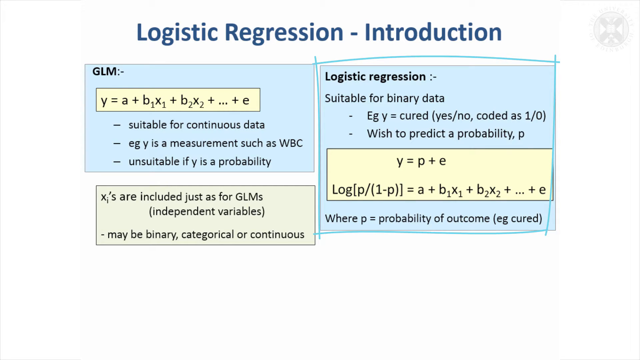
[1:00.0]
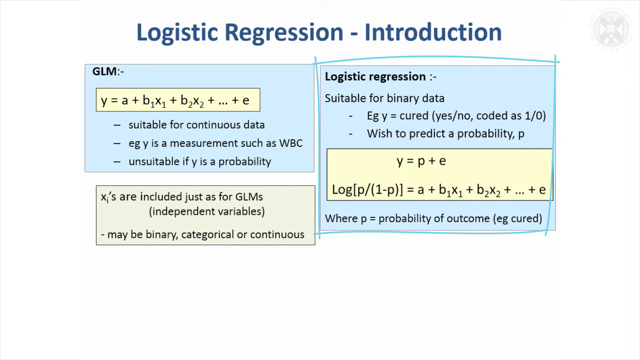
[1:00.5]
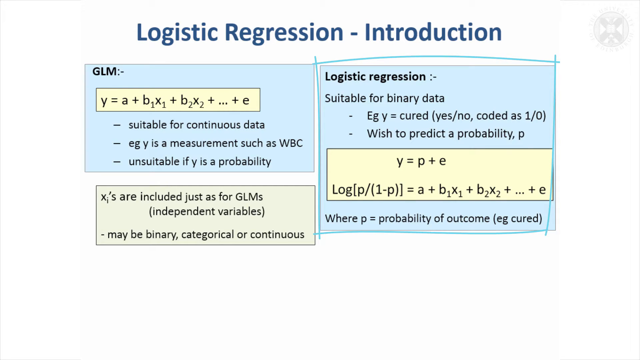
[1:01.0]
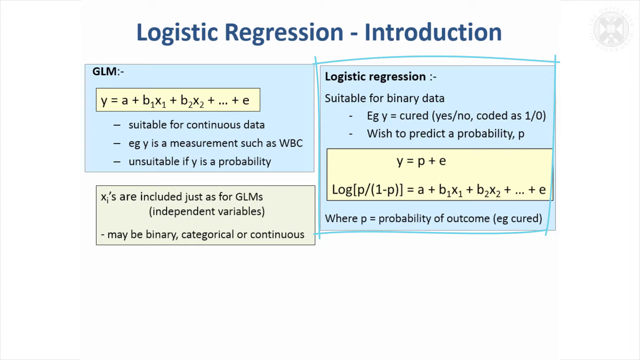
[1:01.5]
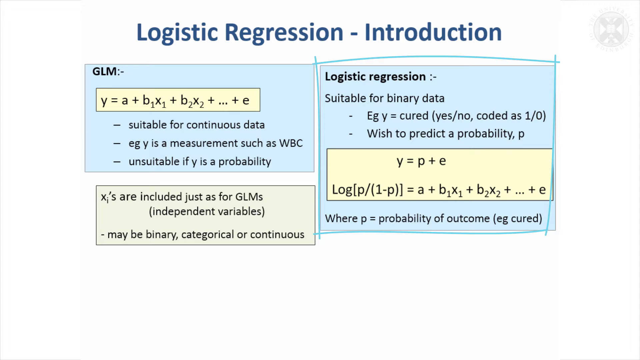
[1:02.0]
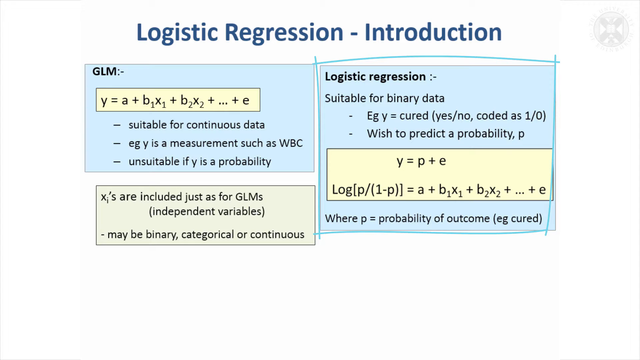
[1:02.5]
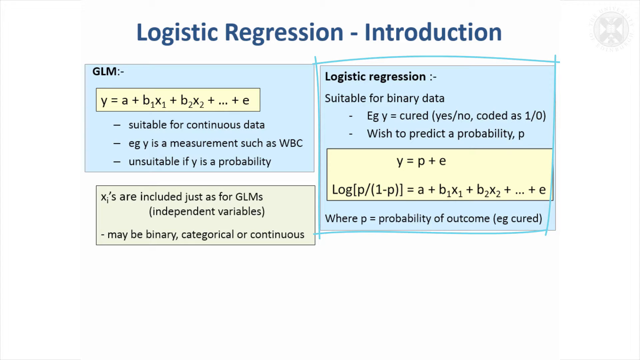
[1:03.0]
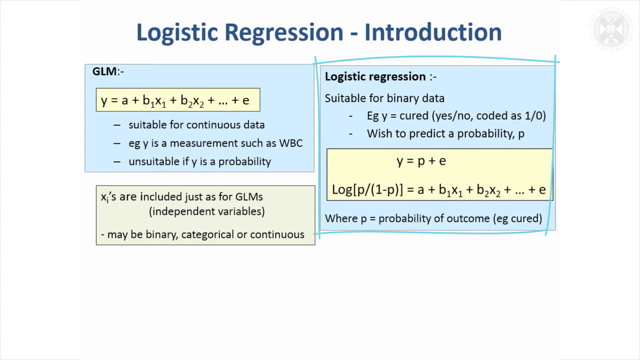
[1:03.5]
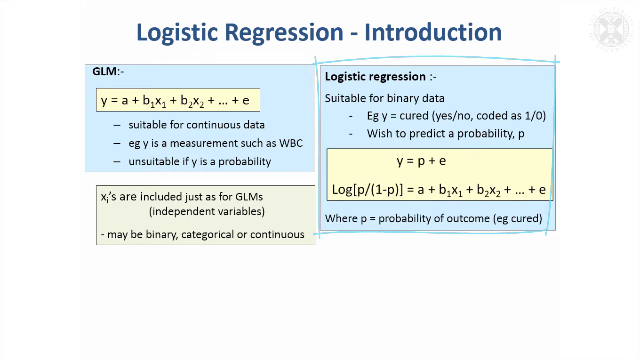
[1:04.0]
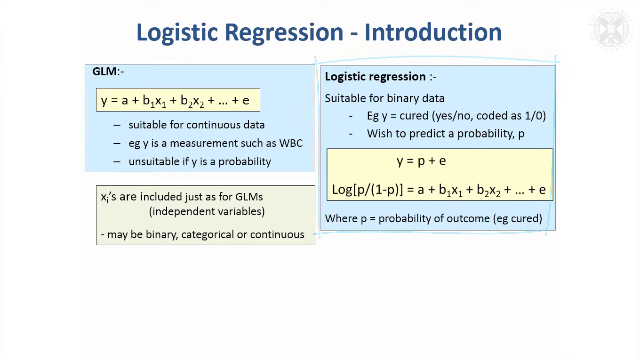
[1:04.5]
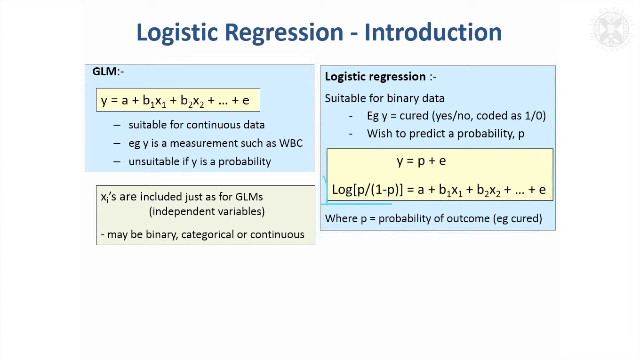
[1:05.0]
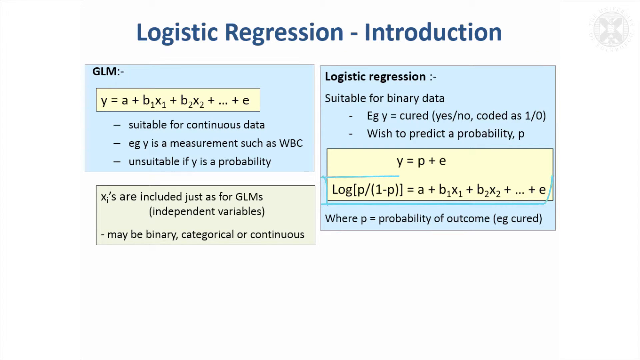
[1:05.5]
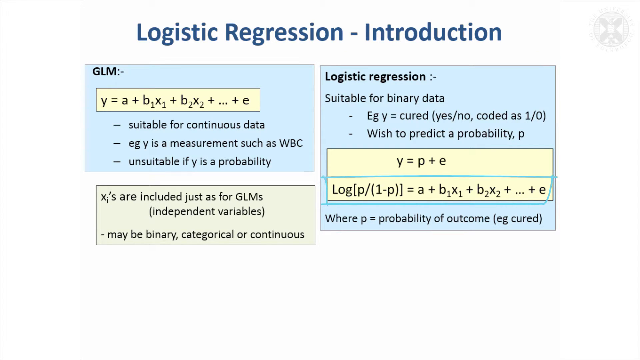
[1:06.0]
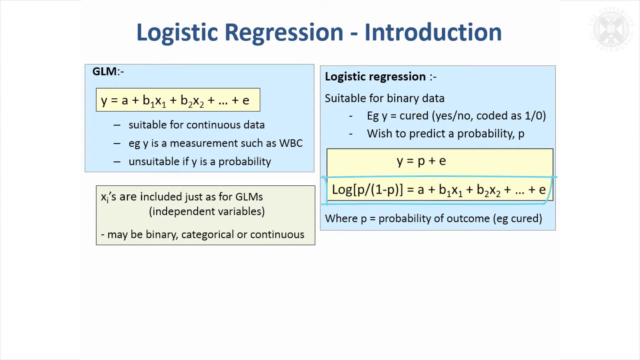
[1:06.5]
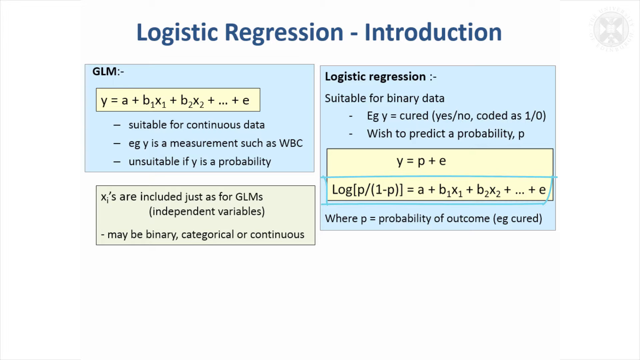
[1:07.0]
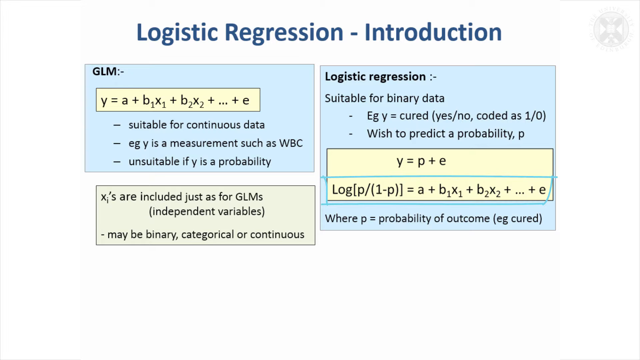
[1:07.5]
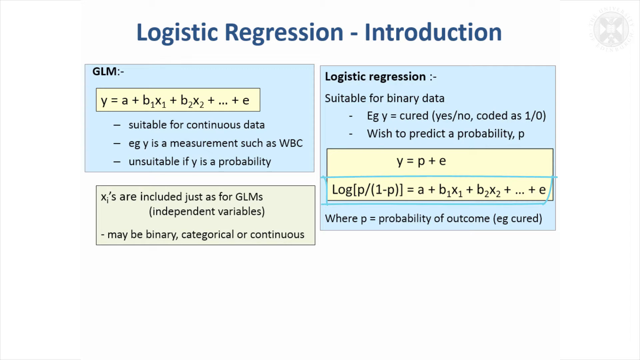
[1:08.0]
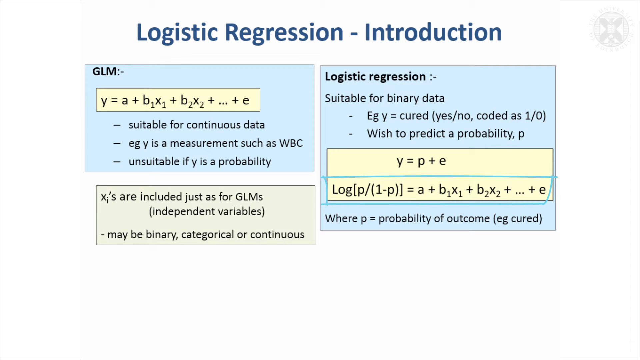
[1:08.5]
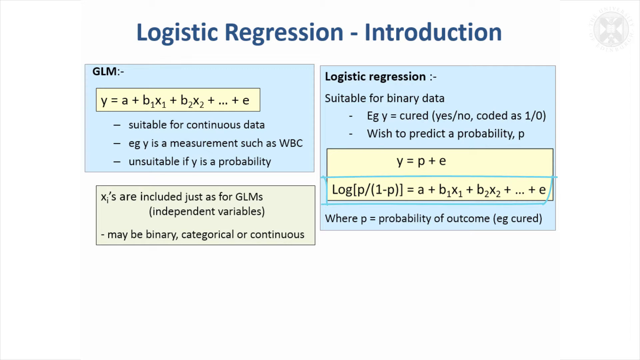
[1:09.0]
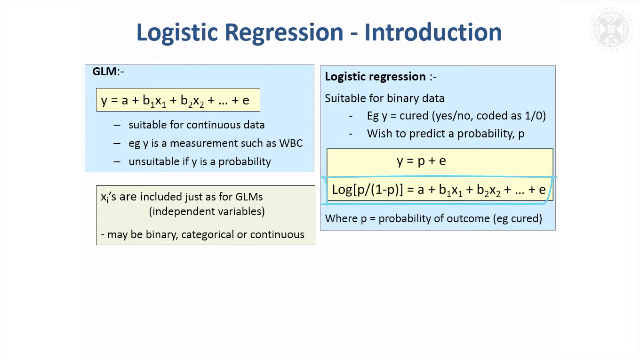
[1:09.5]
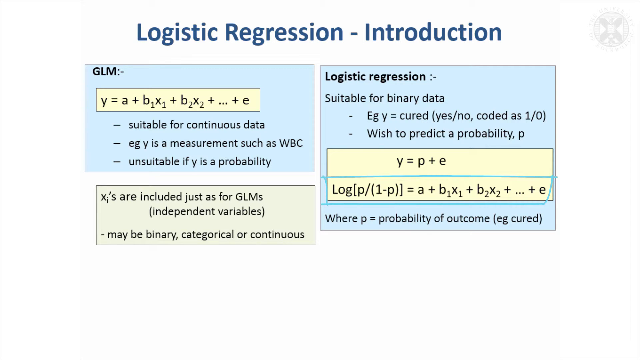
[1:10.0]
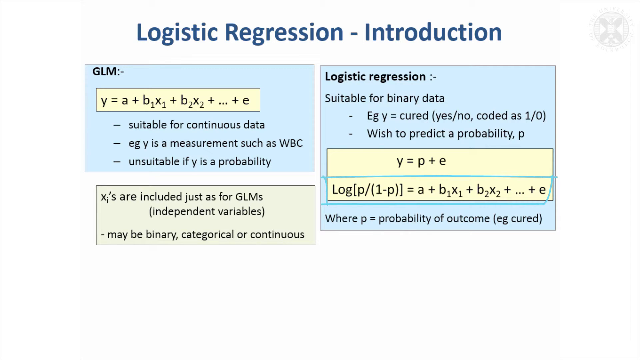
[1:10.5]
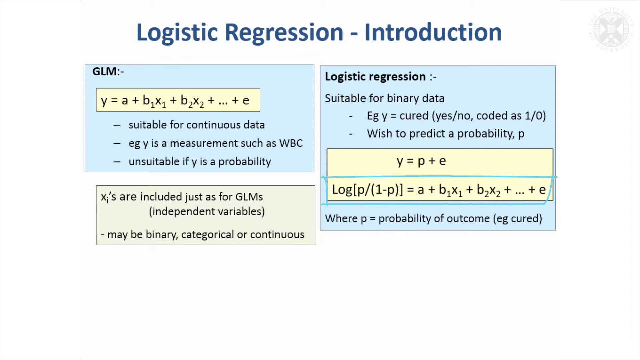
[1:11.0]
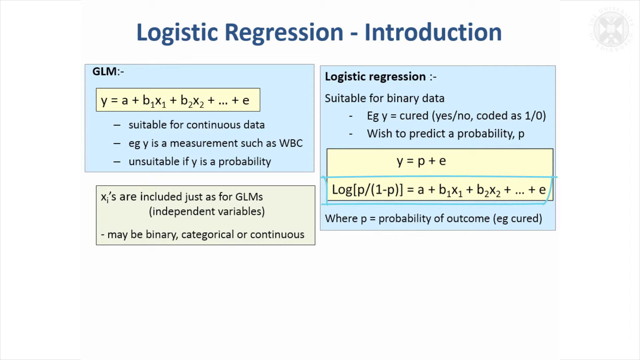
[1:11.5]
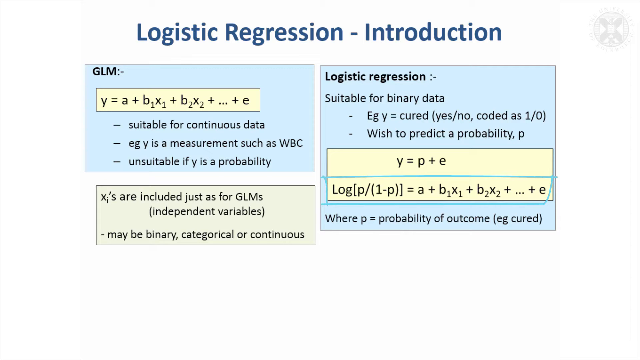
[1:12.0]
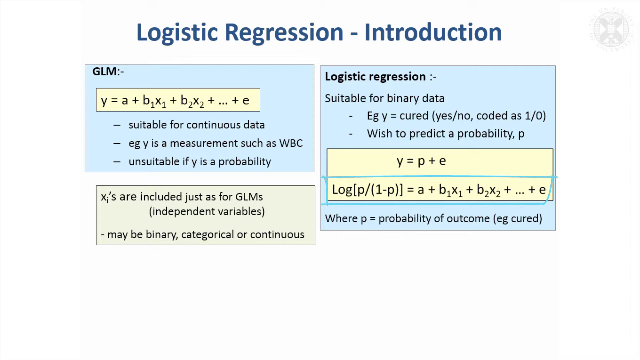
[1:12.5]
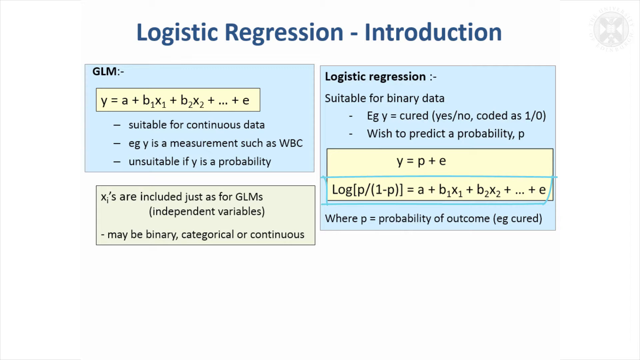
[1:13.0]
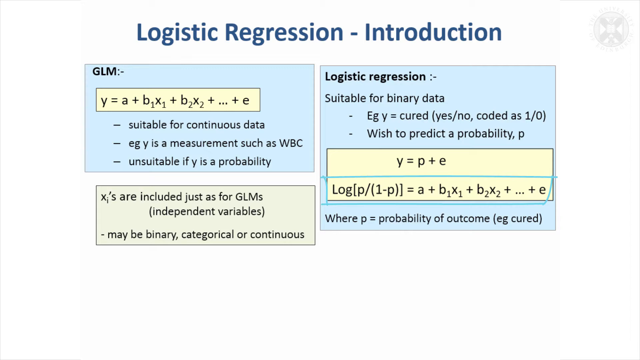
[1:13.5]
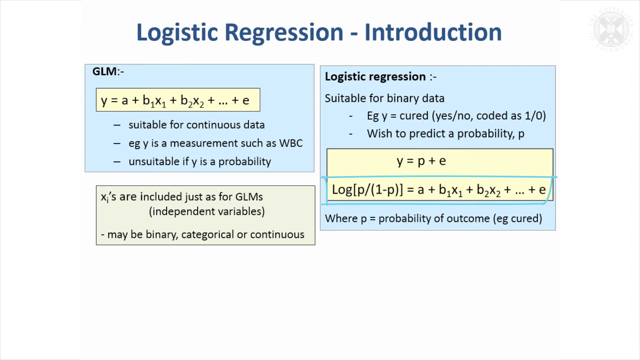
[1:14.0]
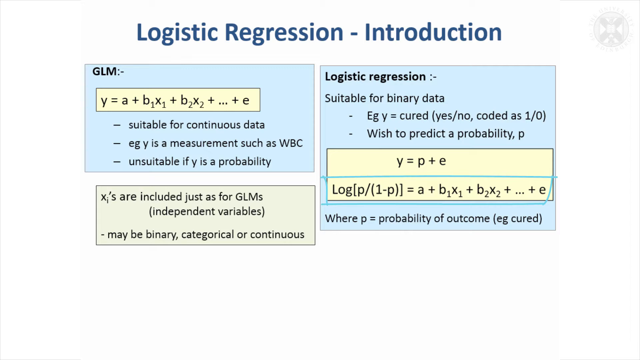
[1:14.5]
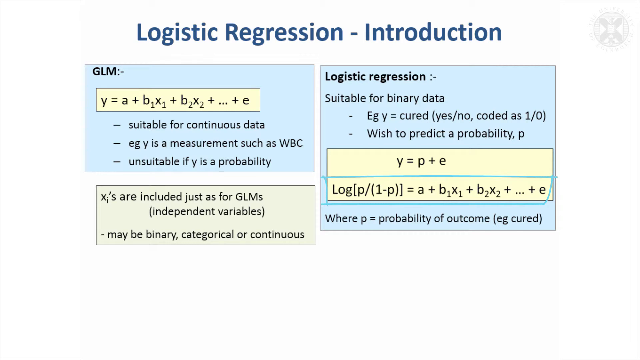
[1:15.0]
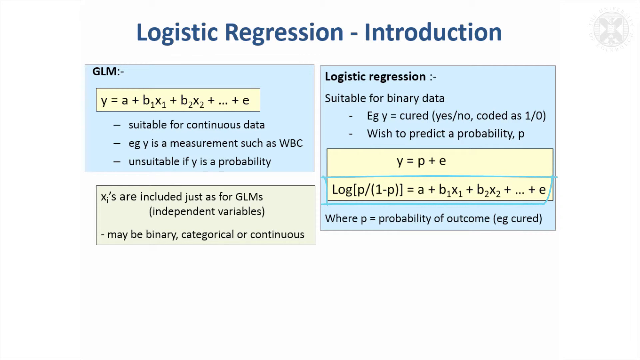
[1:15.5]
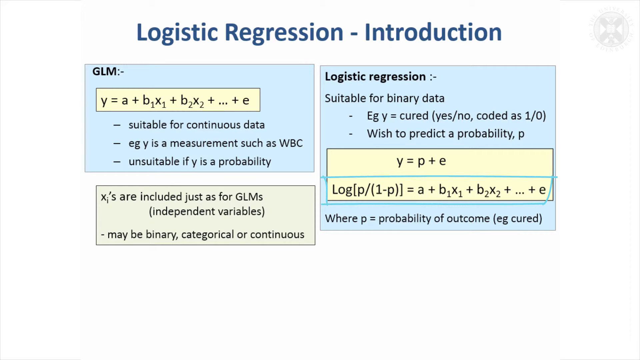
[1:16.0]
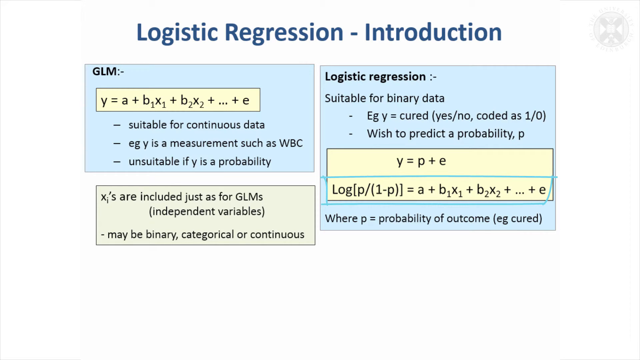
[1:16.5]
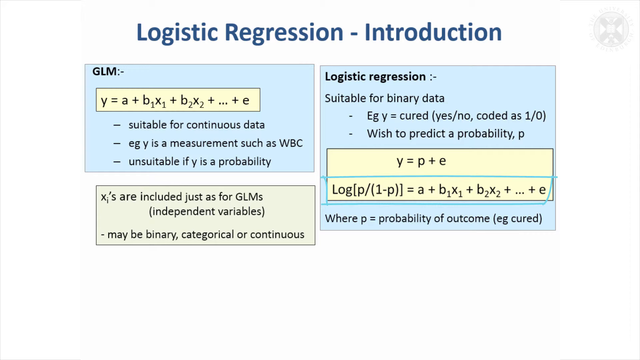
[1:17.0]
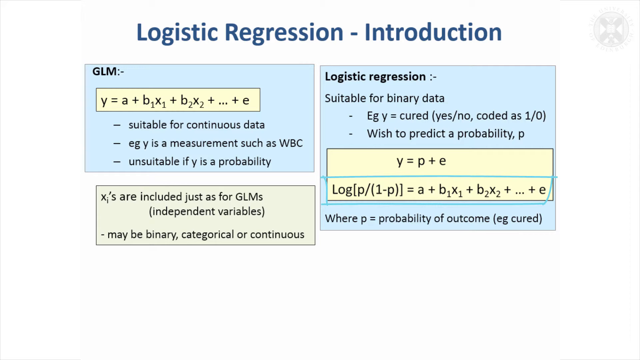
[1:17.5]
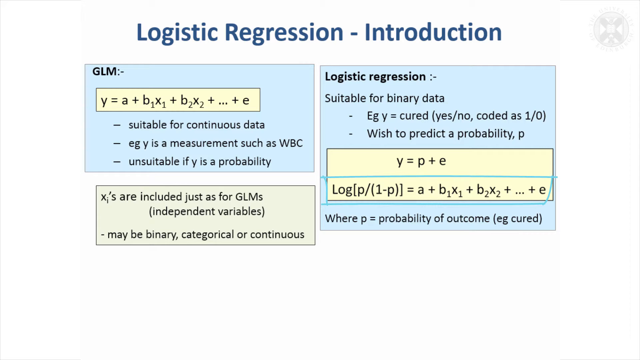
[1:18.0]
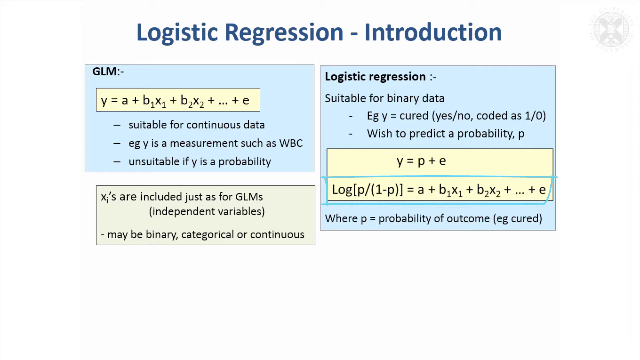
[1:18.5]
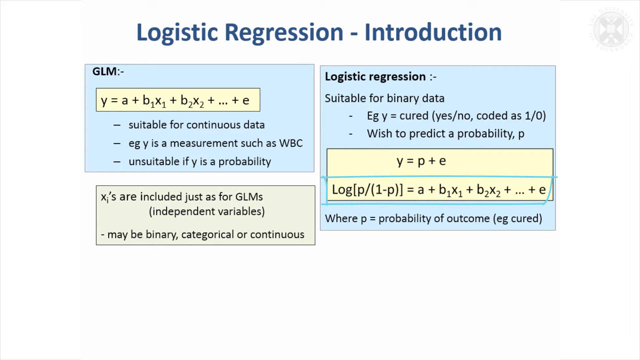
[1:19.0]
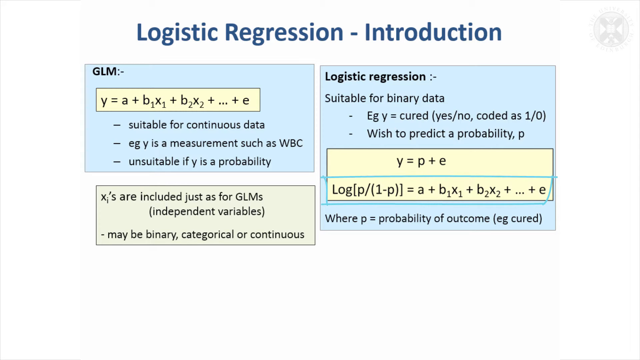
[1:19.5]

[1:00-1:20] A user explains a mathematics screen showing the introduction to logistic regression. There are three tables. The first table has writing on a blue background and an equation on a yellow background reading y = a + b1x1 + b2x2. Points under the equation read "suitable for continuous data", "e.g. y is a measurable such as WBC" and "unsuitable if y is a probability". The second is a logistic regression table with the statement "suitable binary data"; it is mainly on a blue background and contains a smaller table on a yellow background with the equation y = p + e. A final table reads "xi's are included just as for GLMS", with a bracket reading "independent variables" and "may be binary, categorical or continuous". The user draws outside the table, seemingly explaining the logistic regression part.